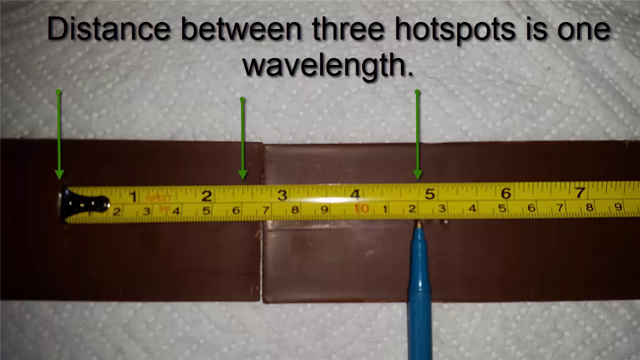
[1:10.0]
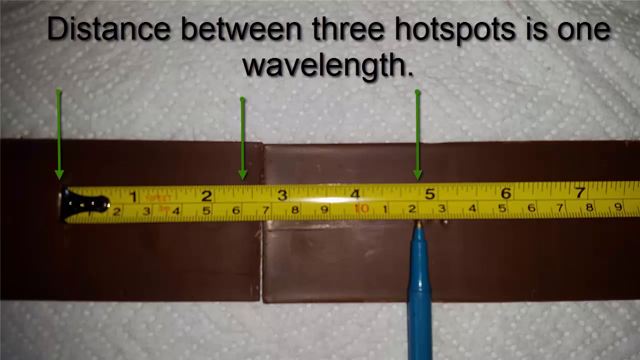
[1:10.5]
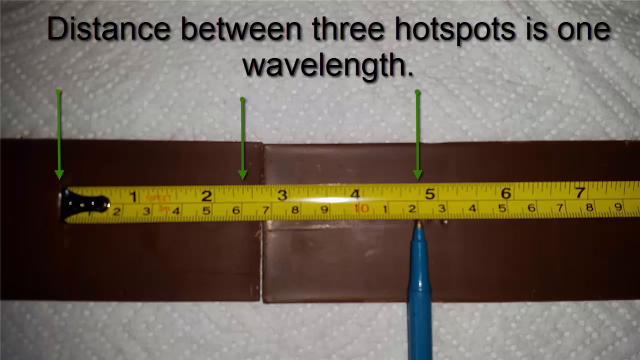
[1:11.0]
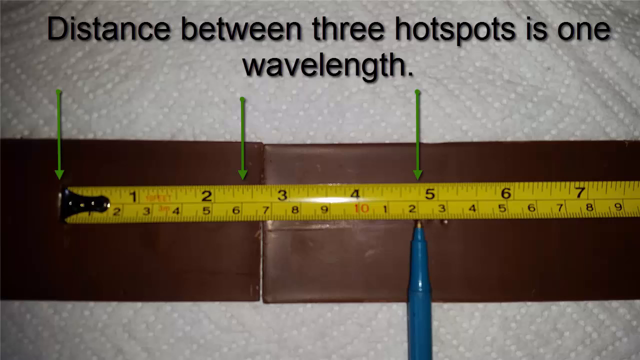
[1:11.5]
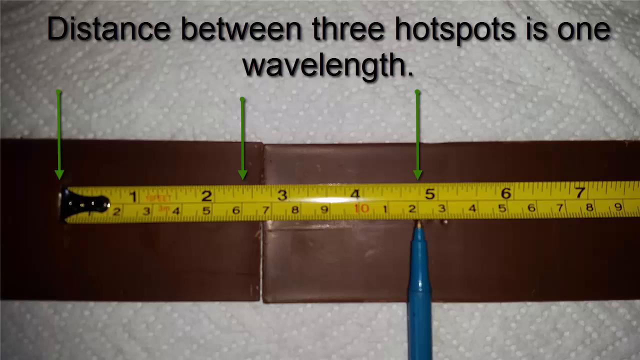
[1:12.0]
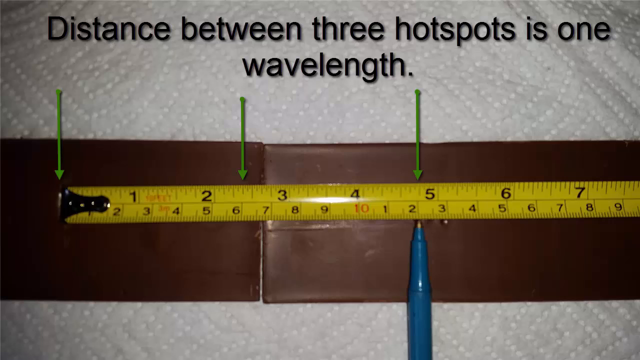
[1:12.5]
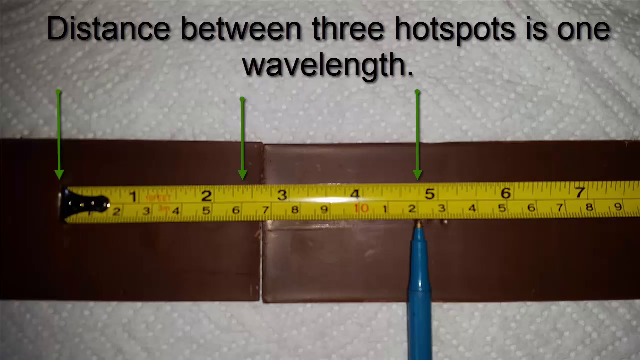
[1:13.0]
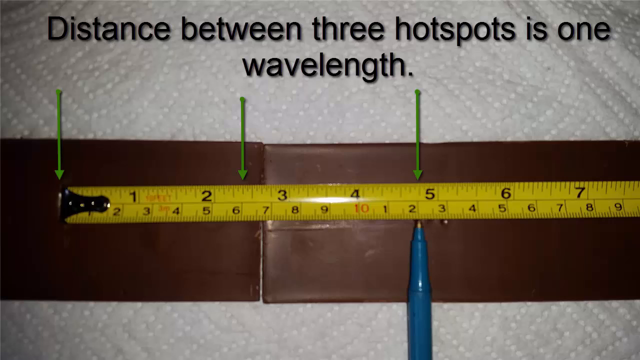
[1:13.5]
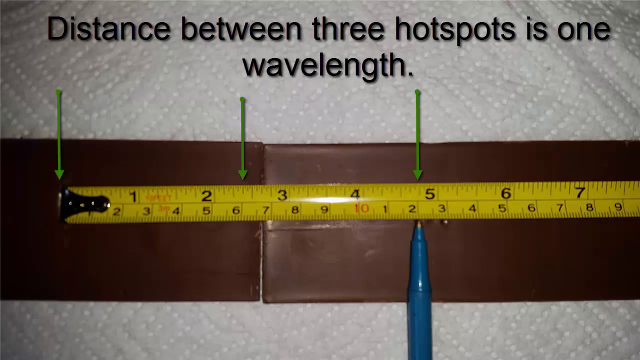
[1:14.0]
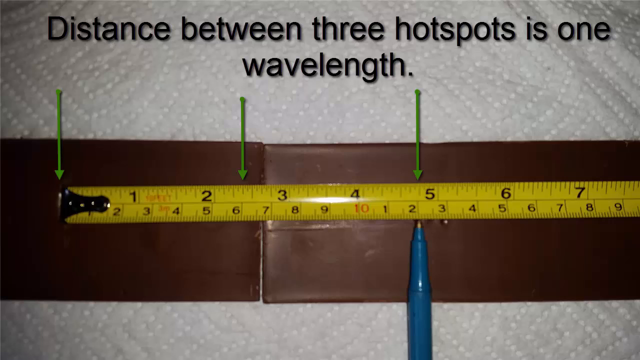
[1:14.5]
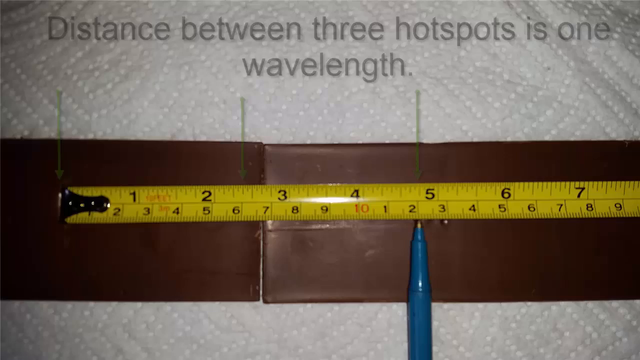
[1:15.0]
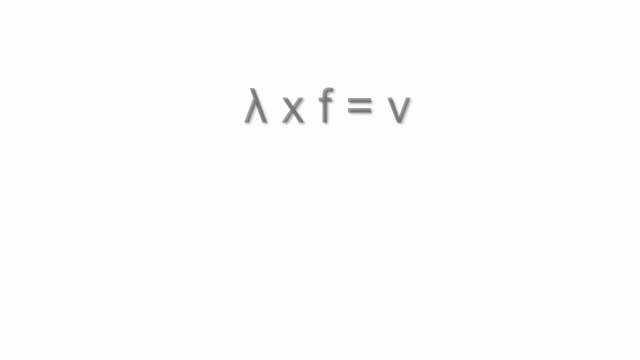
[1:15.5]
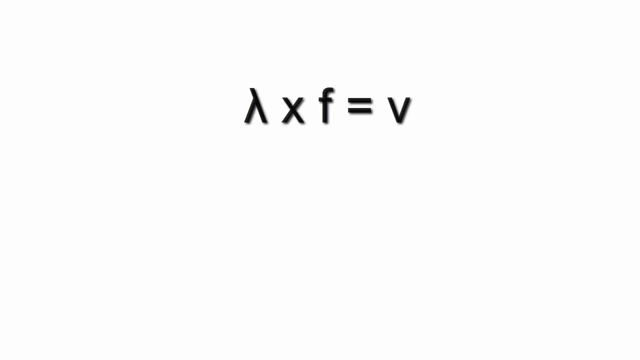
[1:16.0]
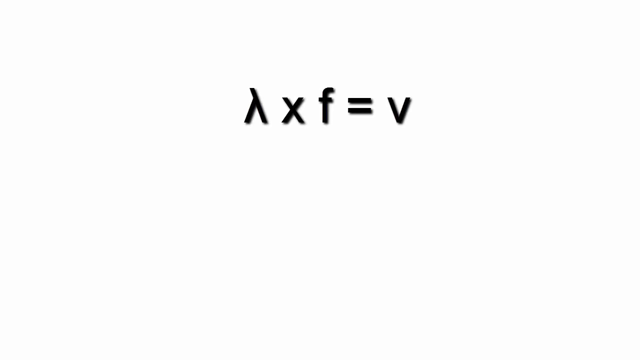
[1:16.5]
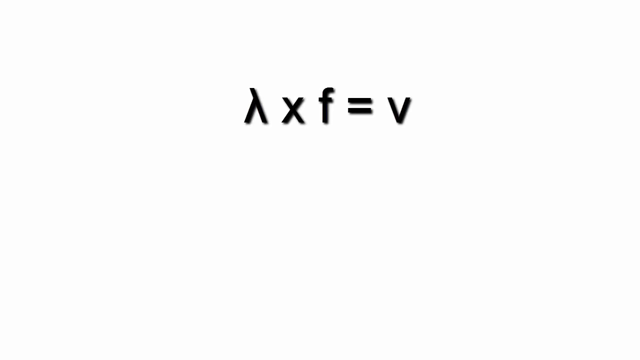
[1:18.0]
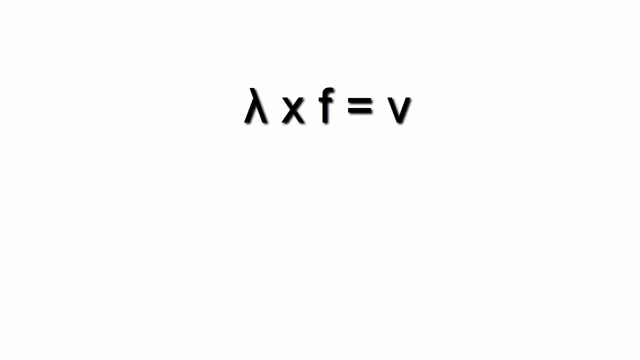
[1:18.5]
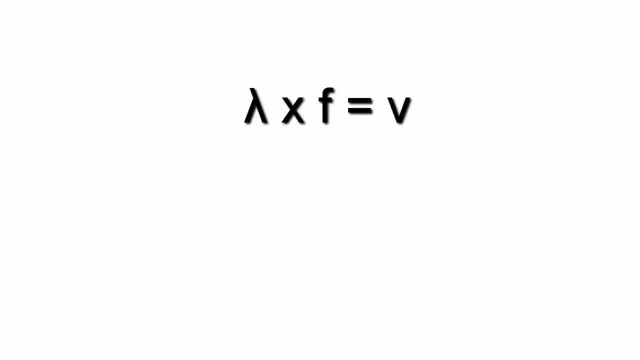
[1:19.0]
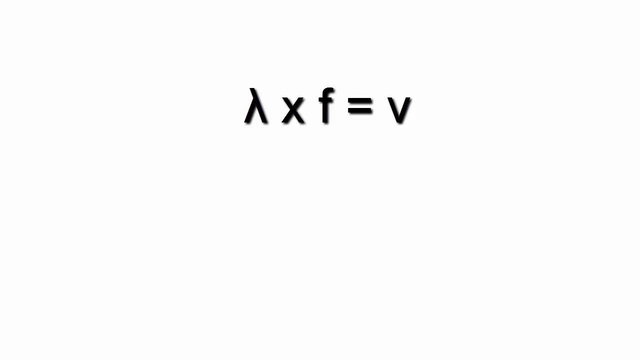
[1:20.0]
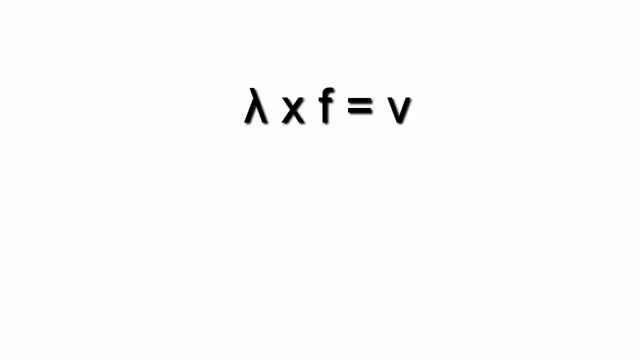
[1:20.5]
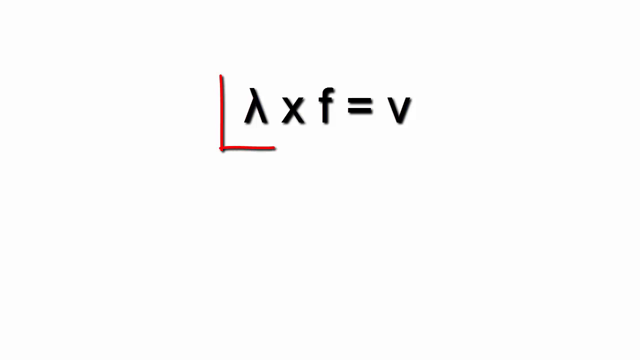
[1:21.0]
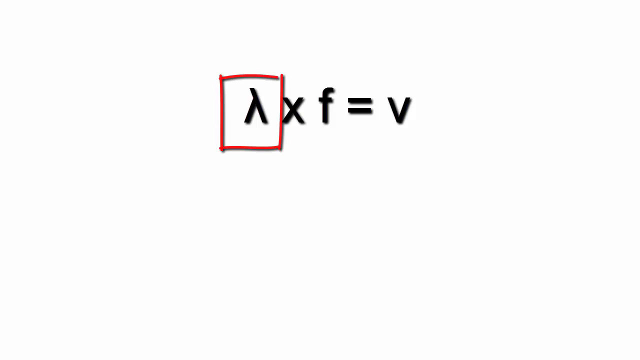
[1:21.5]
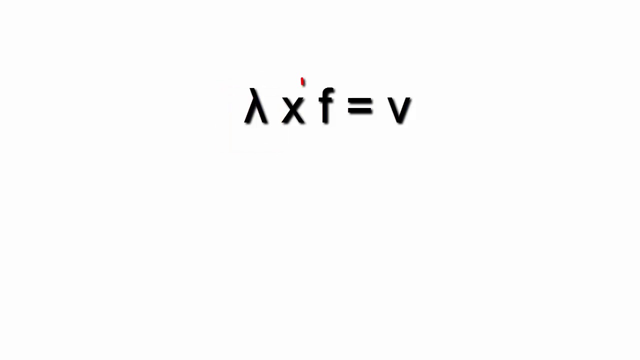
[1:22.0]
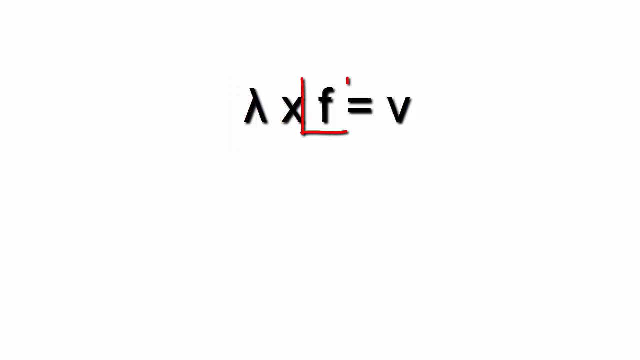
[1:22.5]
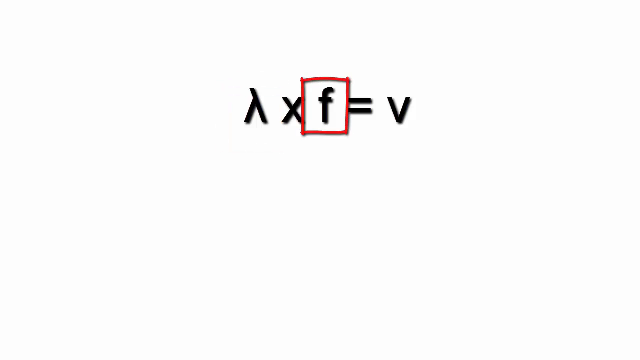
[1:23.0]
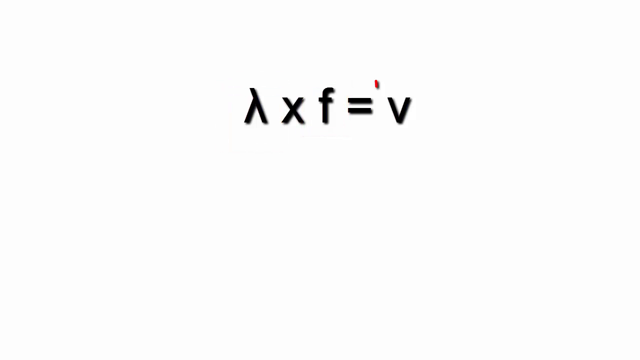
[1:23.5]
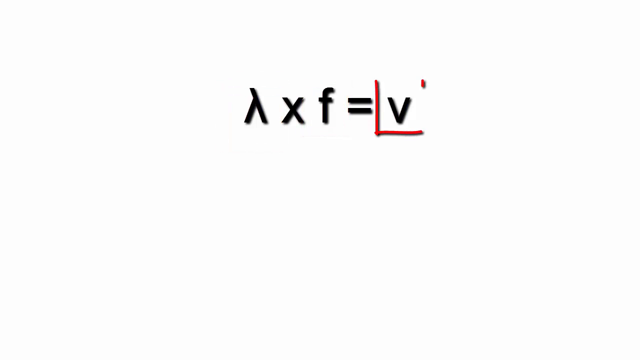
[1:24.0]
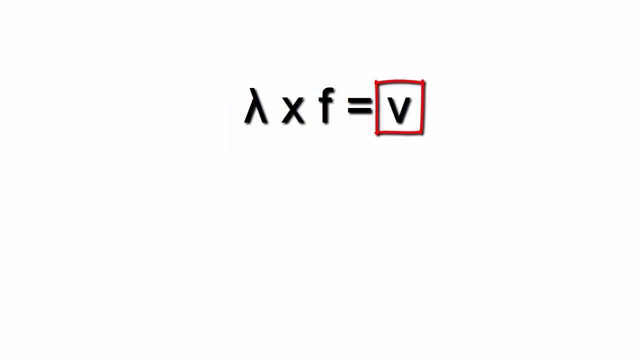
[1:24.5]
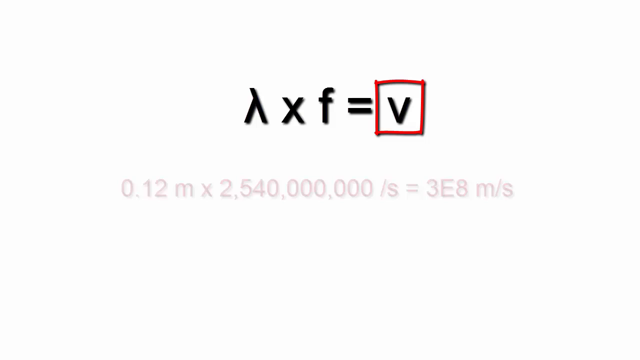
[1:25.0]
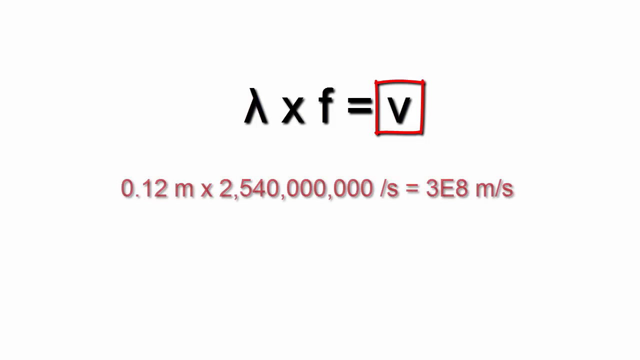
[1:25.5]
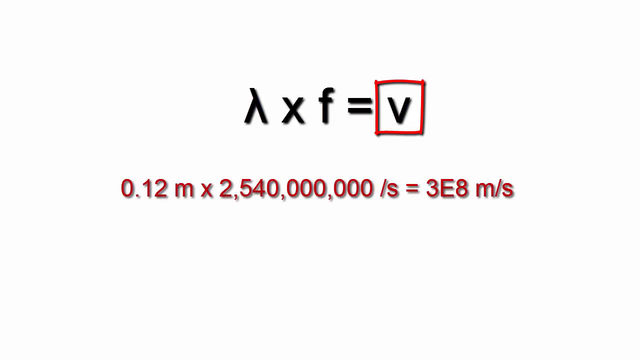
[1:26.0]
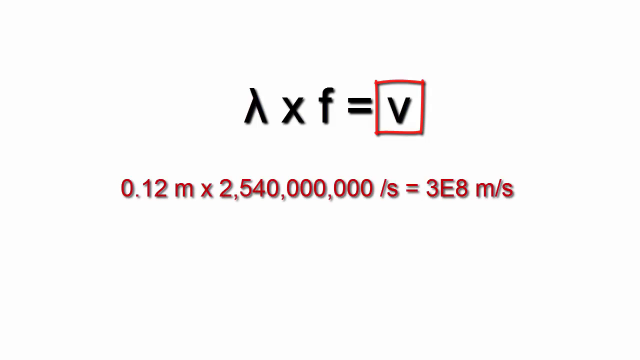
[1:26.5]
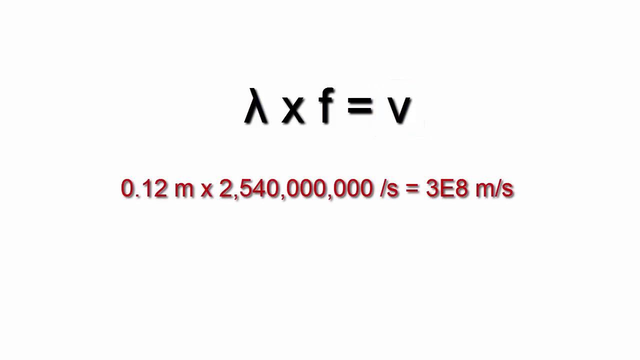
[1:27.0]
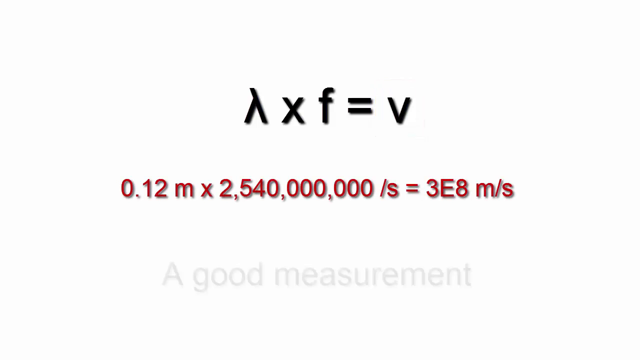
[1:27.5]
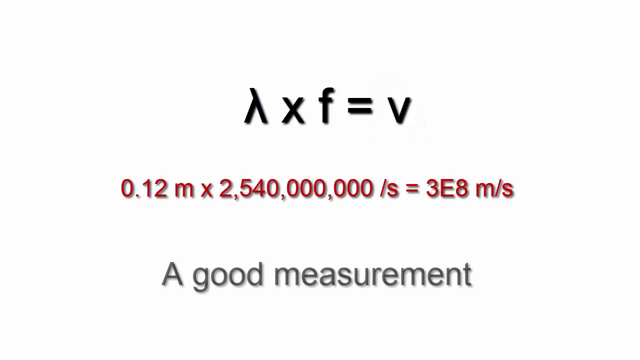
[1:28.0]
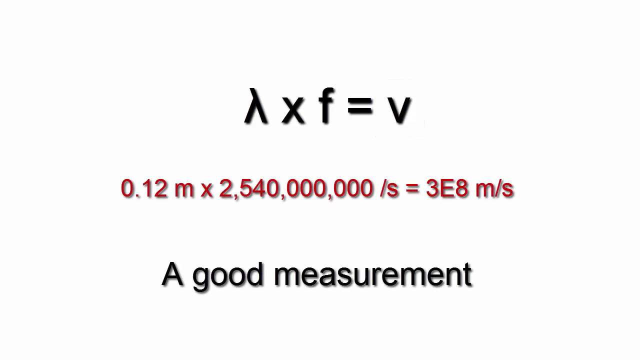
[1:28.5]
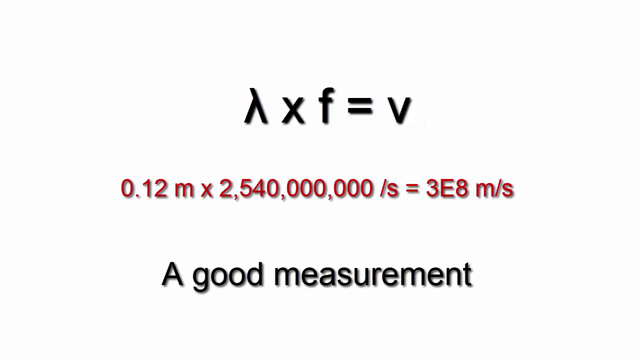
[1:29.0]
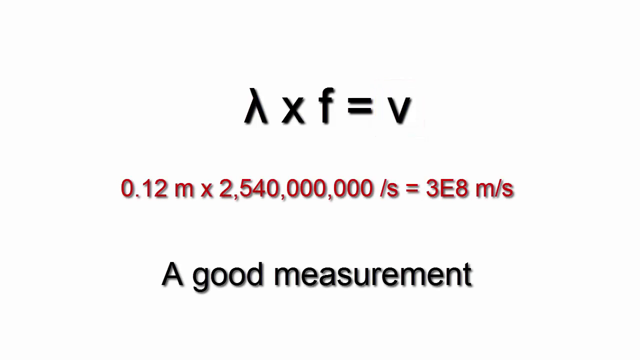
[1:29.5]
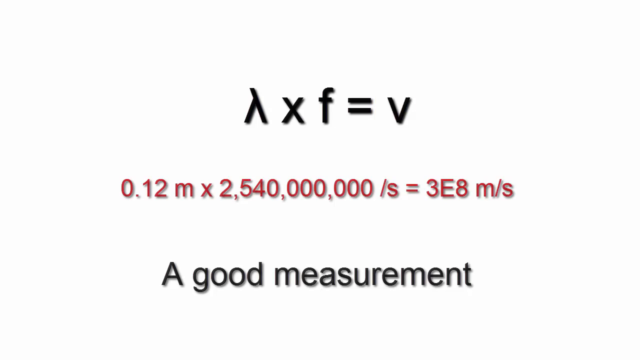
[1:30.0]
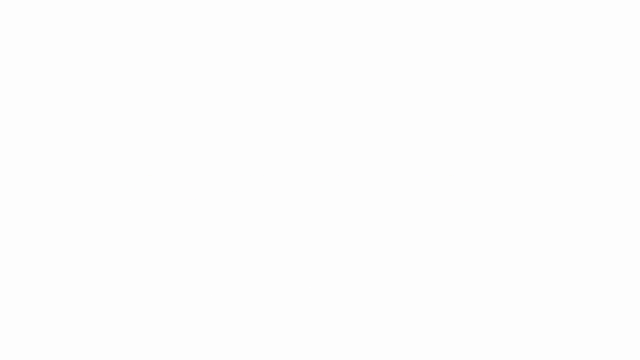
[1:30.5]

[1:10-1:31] A still image shows the two hot bars that were placed inside the microwave on a paper towel, with a measuring tape laid flat across the two rectangles and black writing that says "distance between three hot spots is one wavelength." Green arrows point to the measuring tape: one at the very start, one at two and a half inches, and one at four and three-quarter inches. A blue ballpoint pen also points to the four and three-quarter inches. A math equation then pops up in black writing on a white background: a symbol that looks like a letter A without the line through the middle, followed by "X F equals V." A red X goes over the A-like symbol, then the F, and then the V. Red writing on the screen then says "0.12Mx254000000-S equals 3E8M-S." Black writing underneath all of this says "a good measurement."